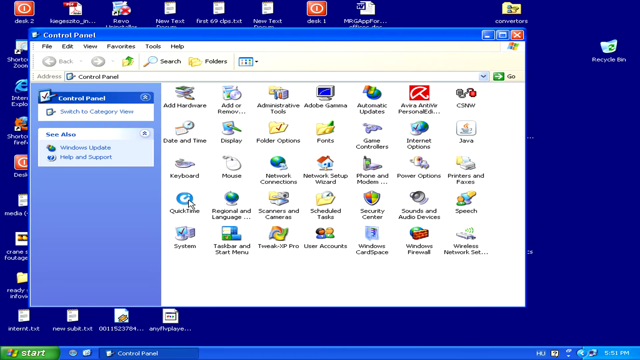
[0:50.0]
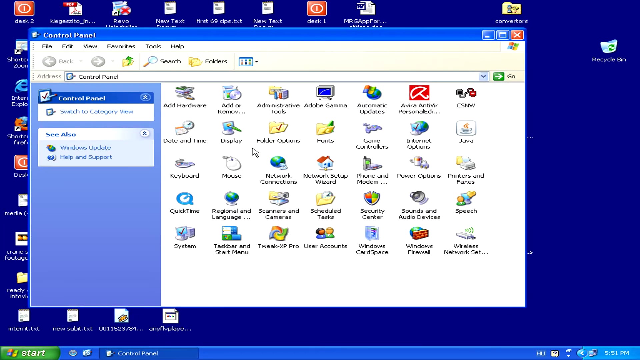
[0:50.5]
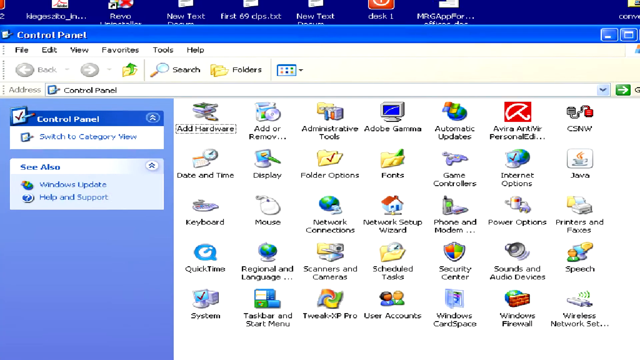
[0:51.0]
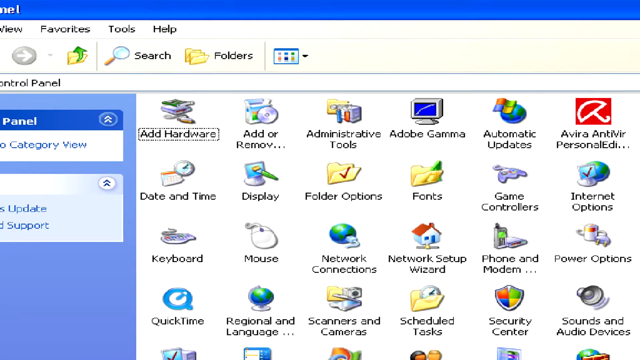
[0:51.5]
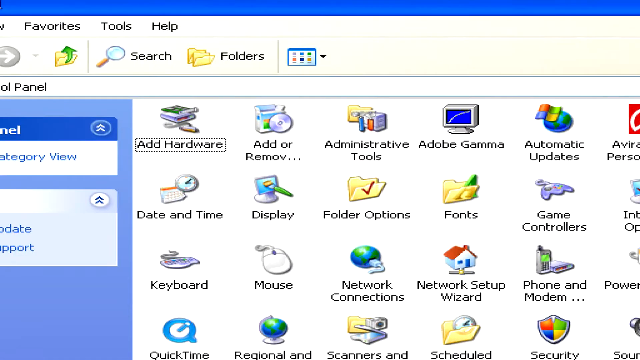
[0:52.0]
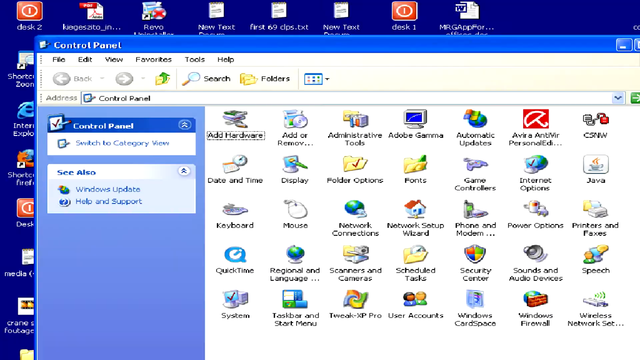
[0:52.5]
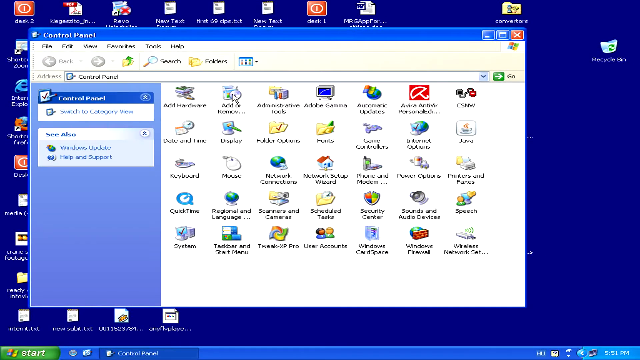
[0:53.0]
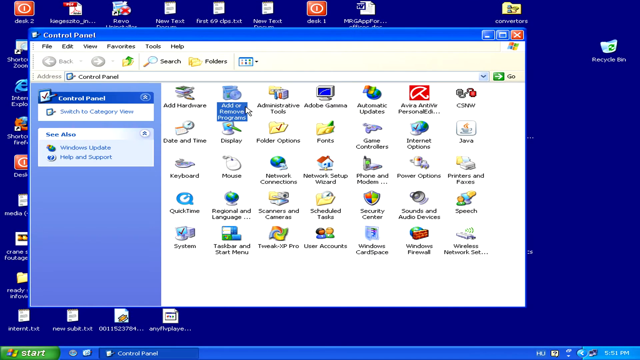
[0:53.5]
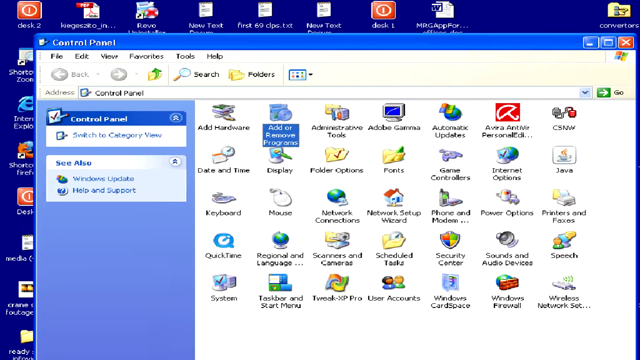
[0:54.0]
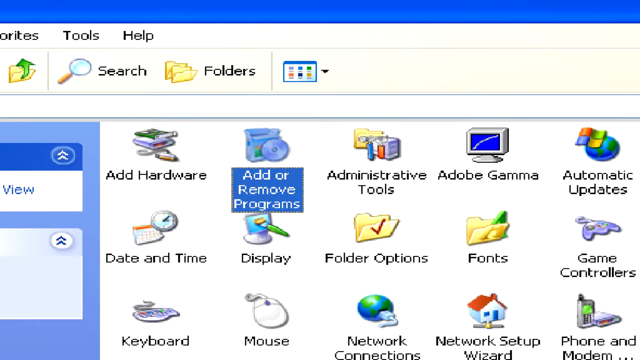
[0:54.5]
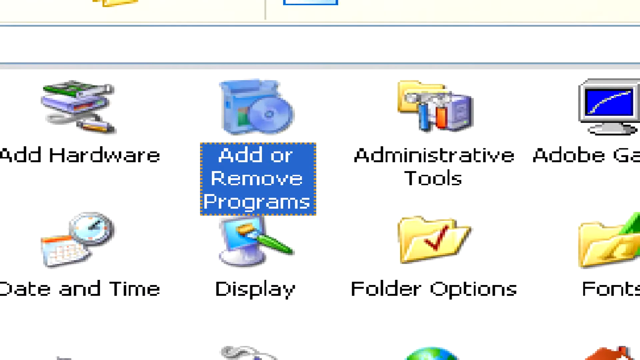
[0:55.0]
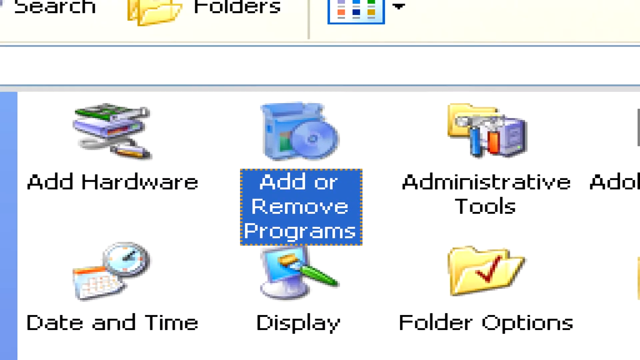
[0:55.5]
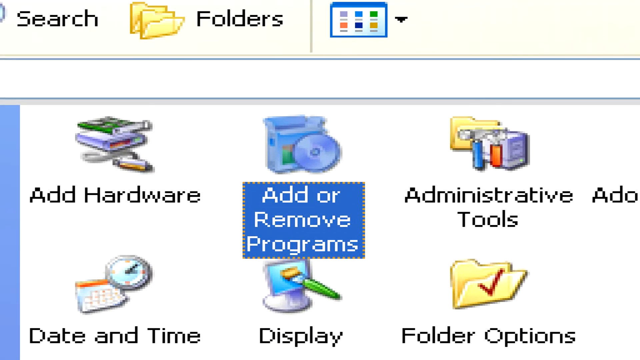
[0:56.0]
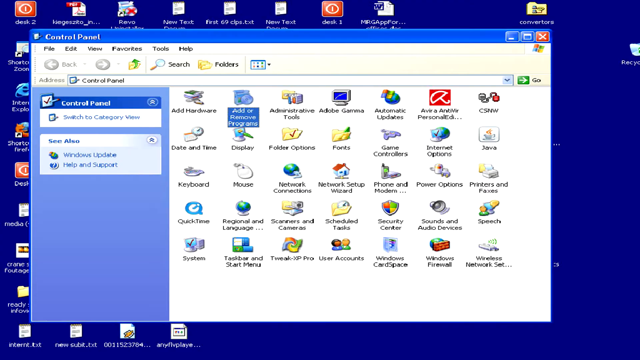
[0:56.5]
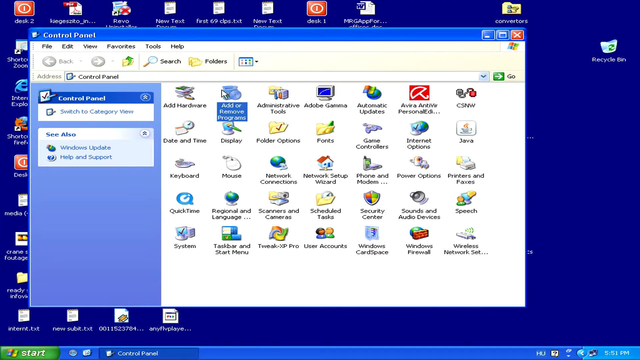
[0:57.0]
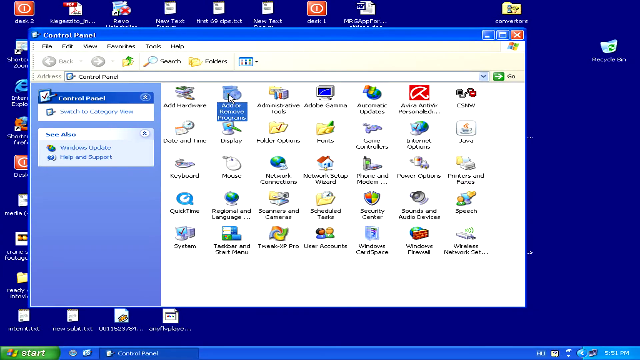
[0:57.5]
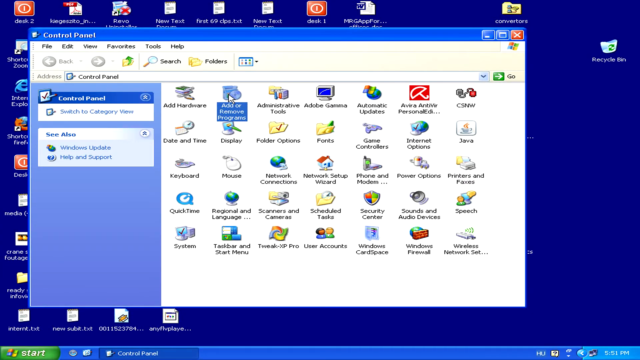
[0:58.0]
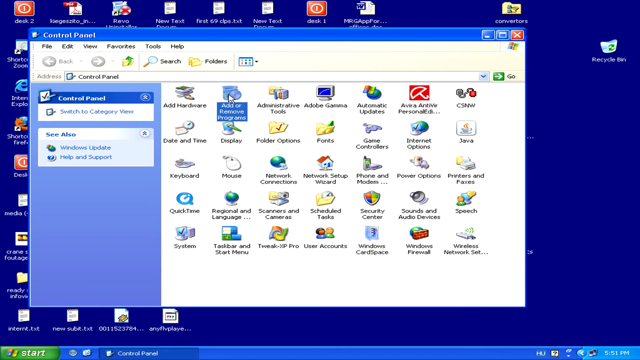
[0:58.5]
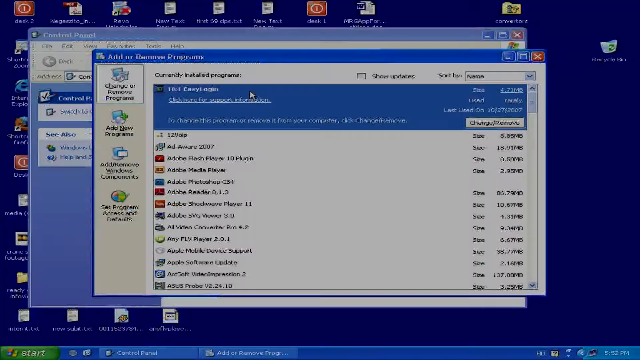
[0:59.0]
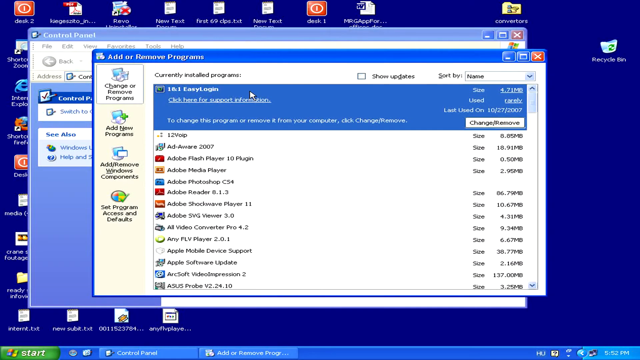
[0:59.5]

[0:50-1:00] On Paul's Windows desktop, the Control Panel is open. It lists Aviva, Automatic Updates, Add/Remove, Adobe Games, Java, Internet Options, and Phone and Modem, among many obsolete items.